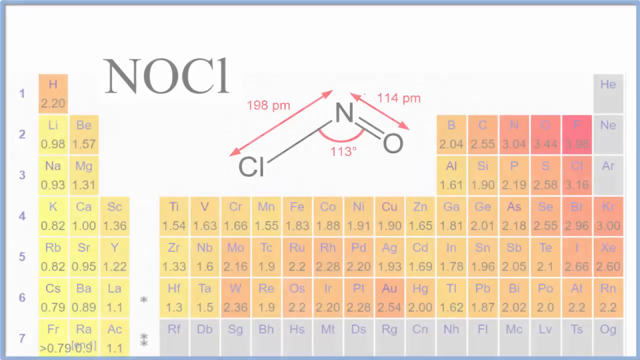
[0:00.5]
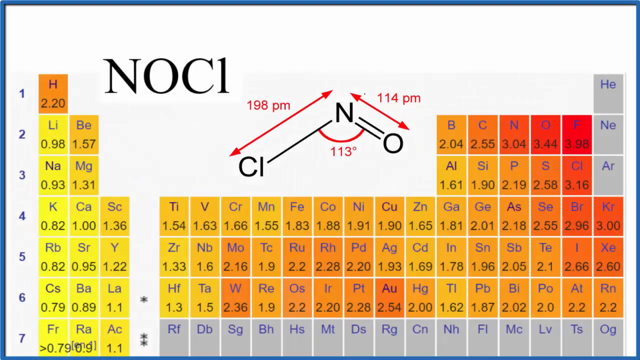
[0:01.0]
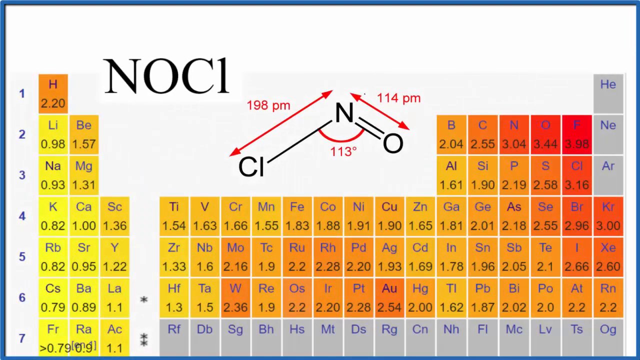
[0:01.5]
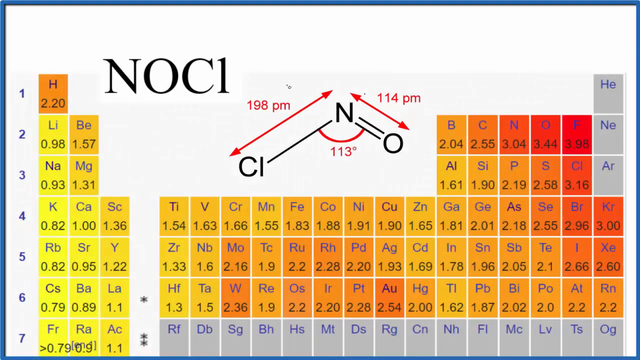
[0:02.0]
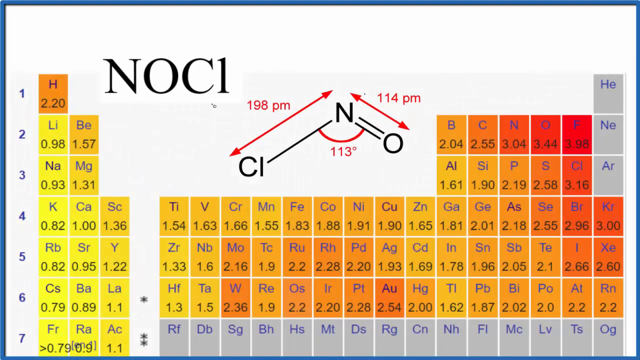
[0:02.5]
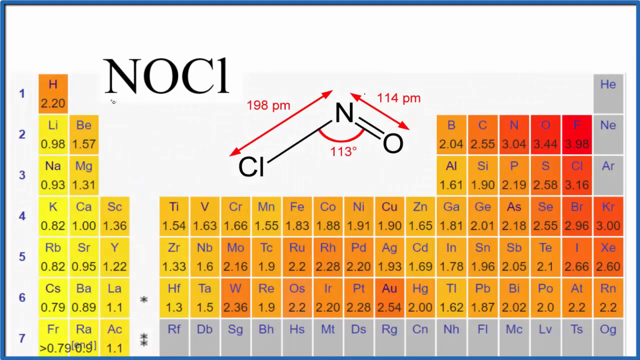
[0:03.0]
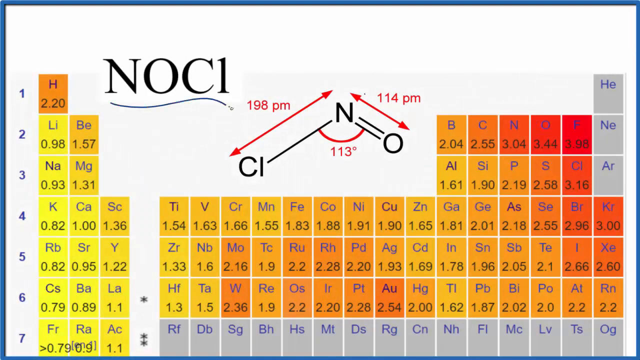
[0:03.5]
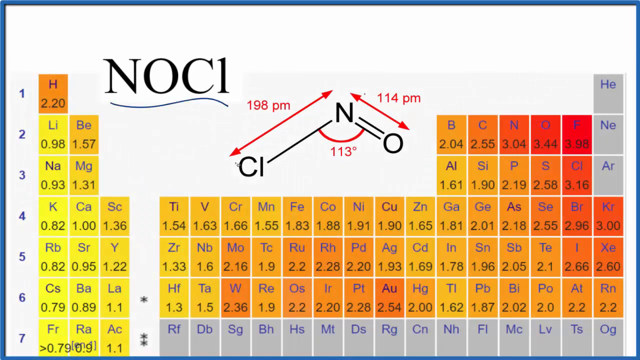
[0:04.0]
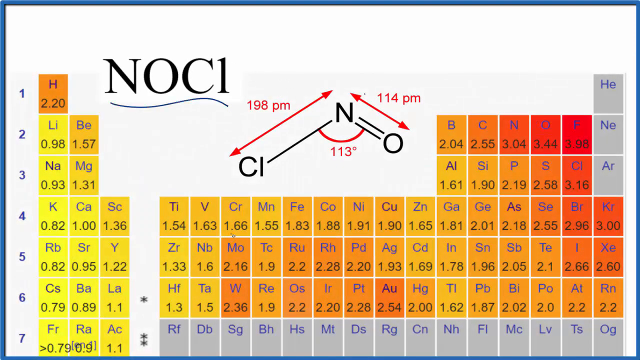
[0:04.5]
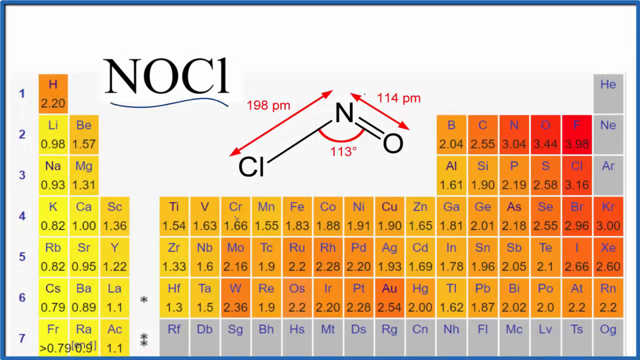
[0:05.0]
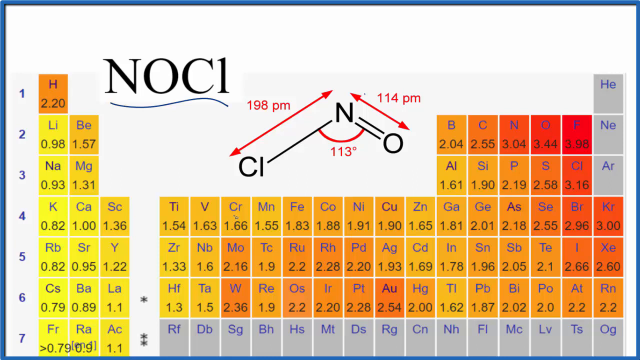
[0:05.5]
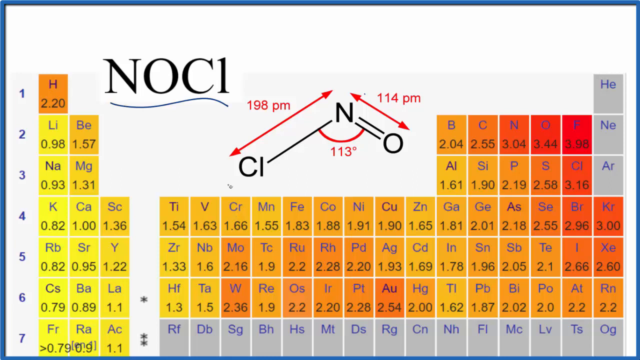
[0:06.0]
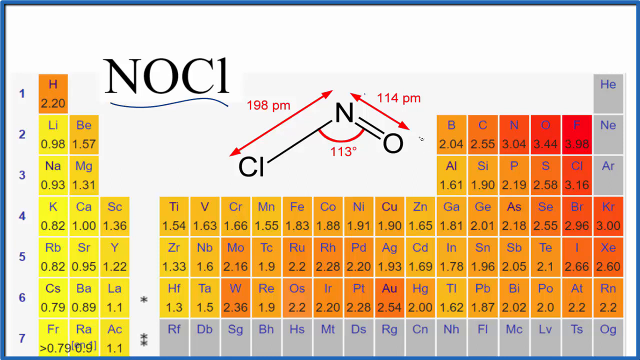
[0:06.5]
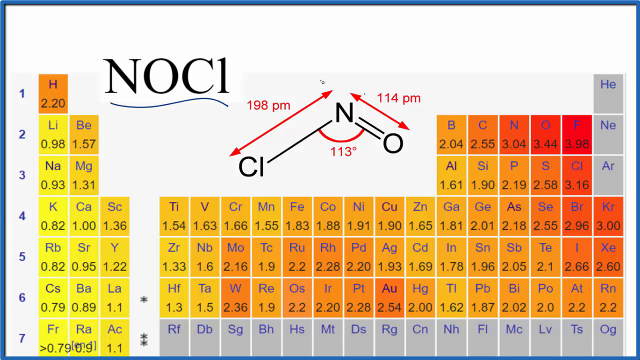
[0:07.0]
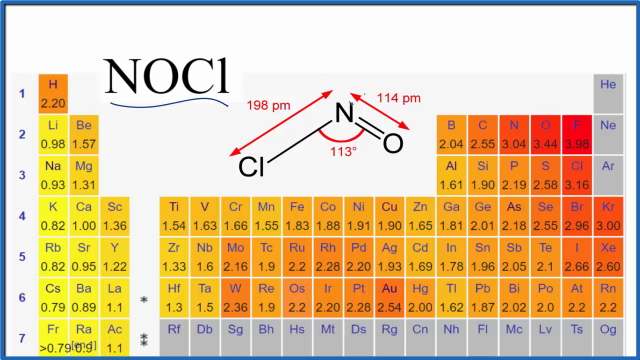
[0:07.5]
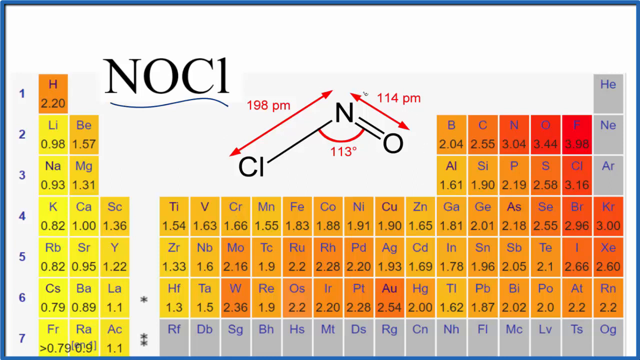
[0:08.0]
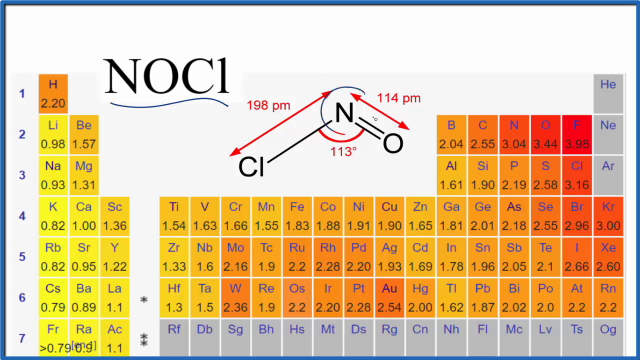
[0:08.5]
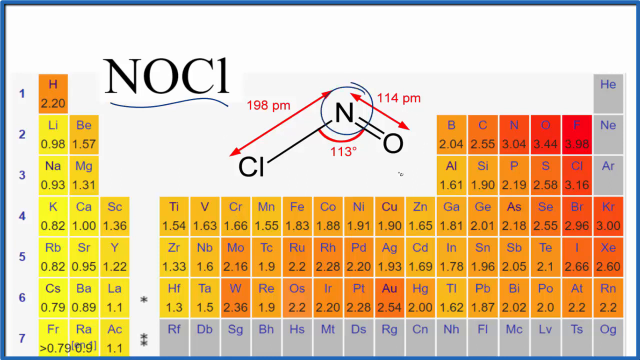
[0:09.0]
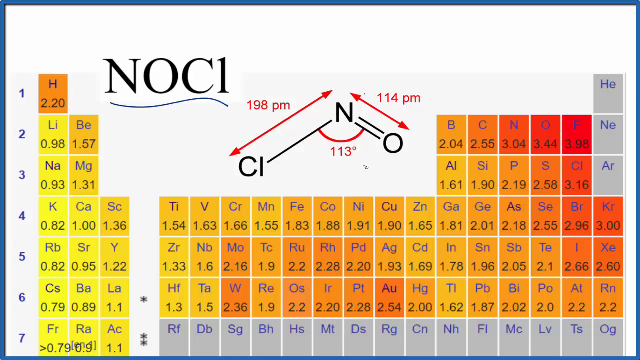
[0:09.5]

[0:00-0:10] This is a video on the periodic table. The background is white with a light blue border around the outside. Down the left side are the numbers one, two, three, four, five and six from top to bottom. Then there are six elements in a row, five, three, then four for the next nine rows, six for the next five, and seven on the last one. In the top left, just in from the H, it says "NOC1", and down to the right of that is an N with two lines going down to an O on the right side and one line going down to CI. Below it, a little red mark goes under it with "113 degrees". Above, on the right side, an arrow goes up and down with "114 PM", and on the left side is "198 PM". The cursor goes up under NOC1 and puts an underline under it, then goes down to the CI, moves around a lot, and circles the N.